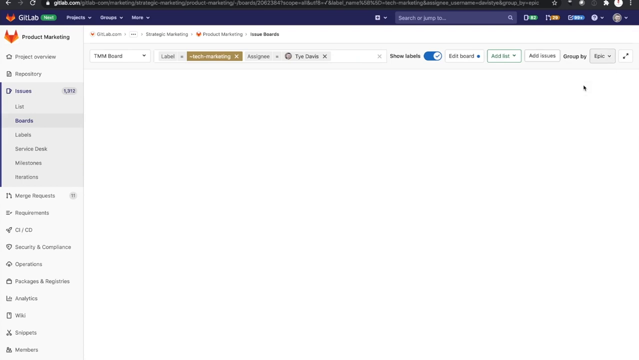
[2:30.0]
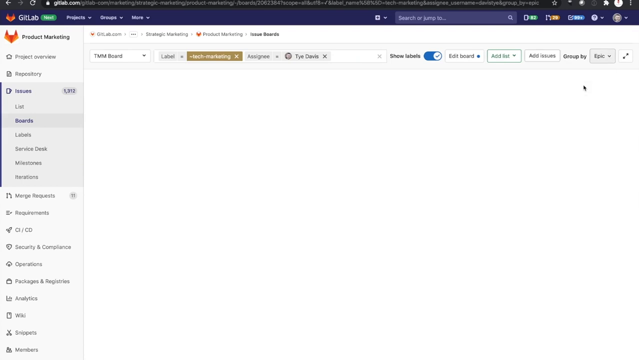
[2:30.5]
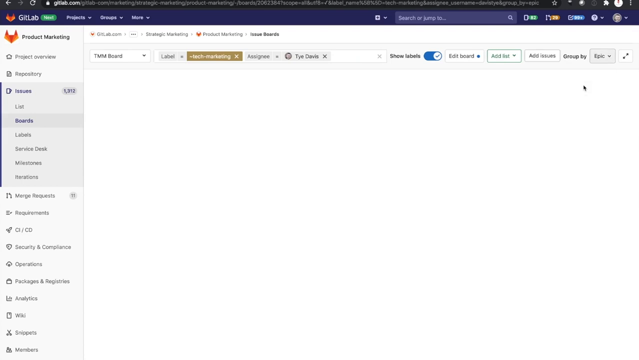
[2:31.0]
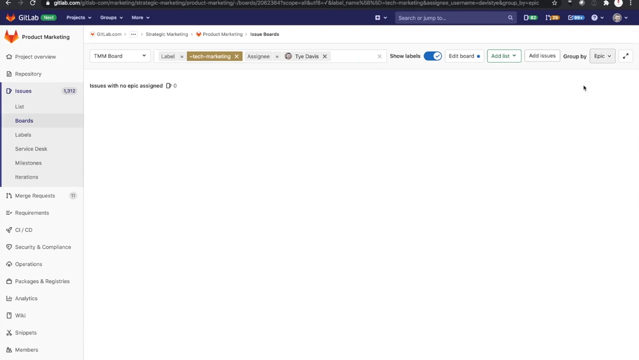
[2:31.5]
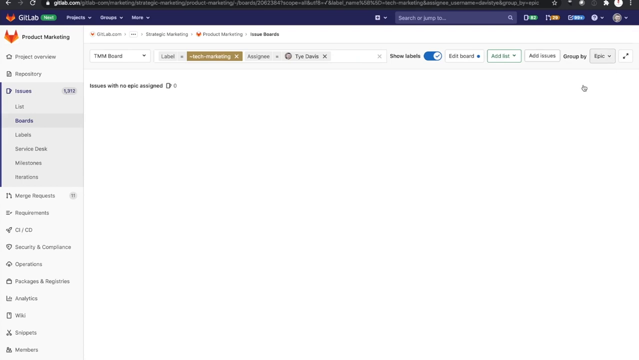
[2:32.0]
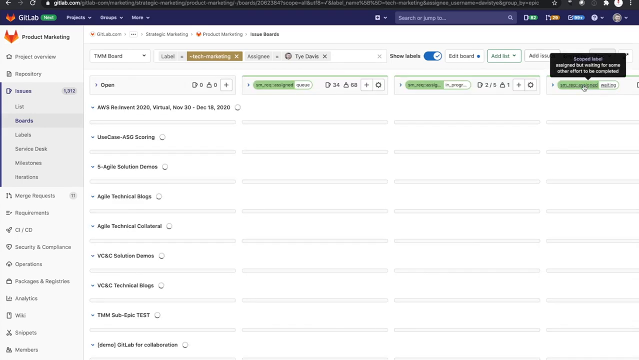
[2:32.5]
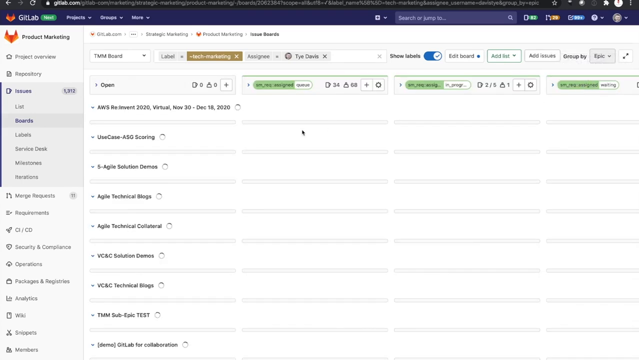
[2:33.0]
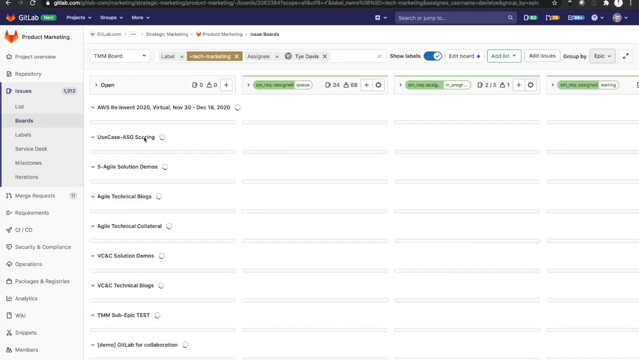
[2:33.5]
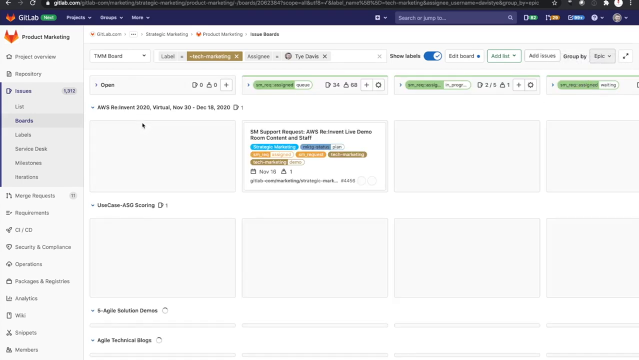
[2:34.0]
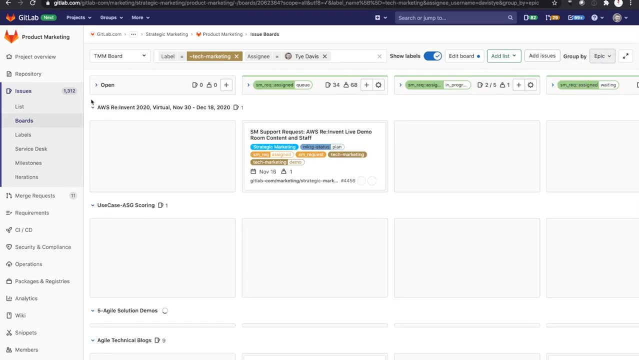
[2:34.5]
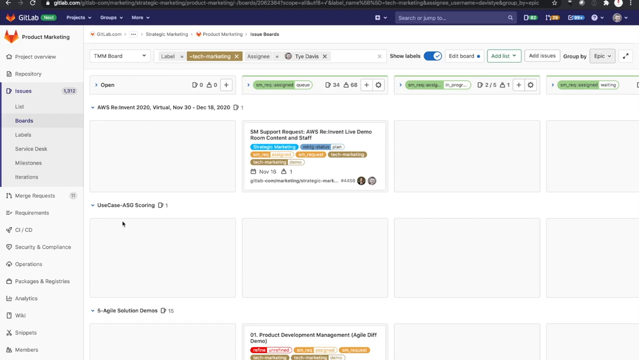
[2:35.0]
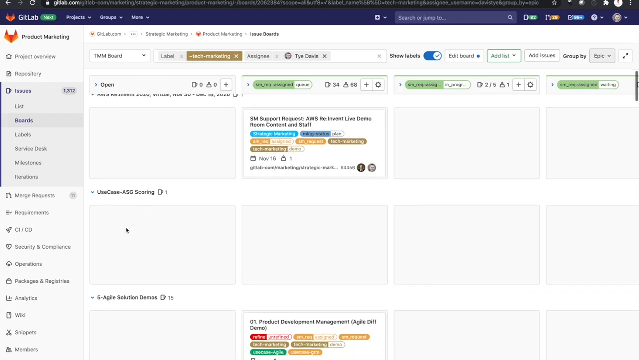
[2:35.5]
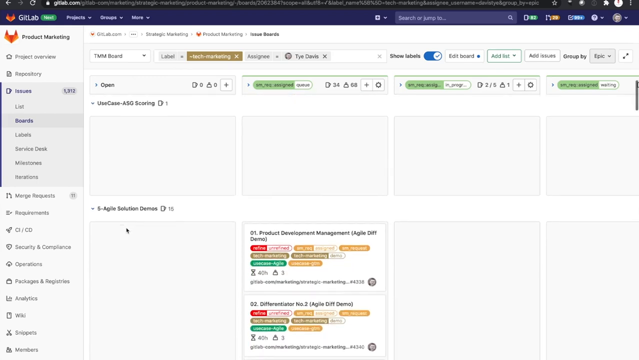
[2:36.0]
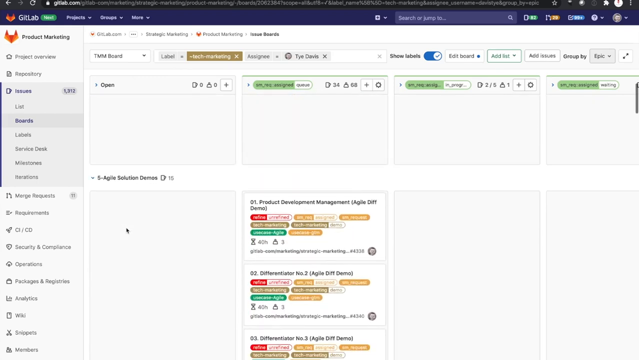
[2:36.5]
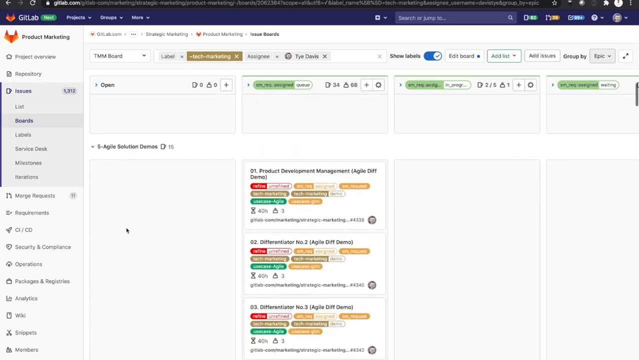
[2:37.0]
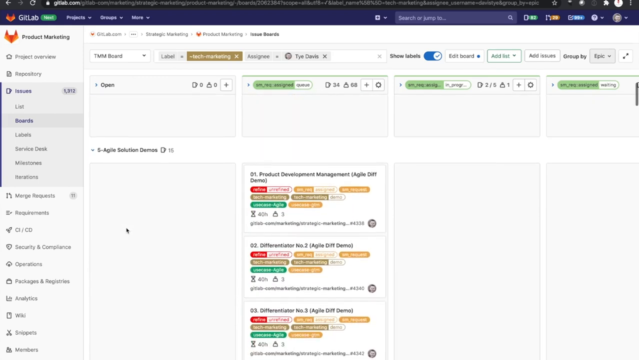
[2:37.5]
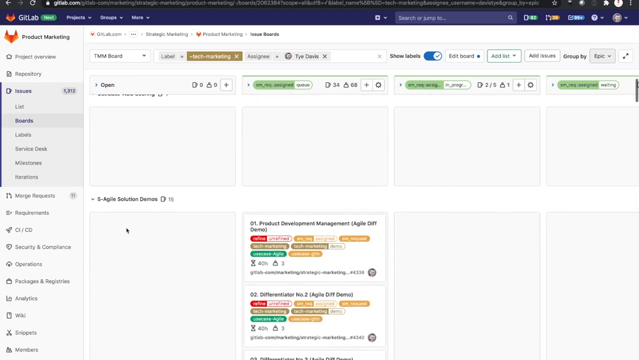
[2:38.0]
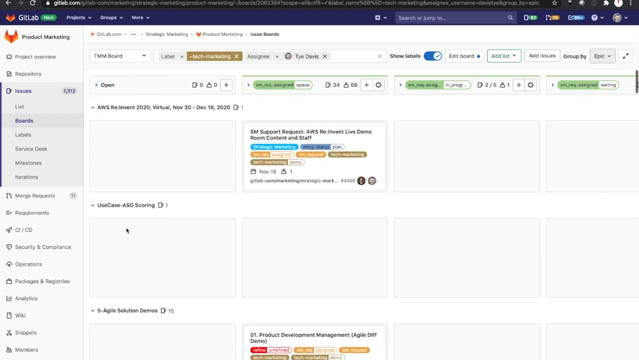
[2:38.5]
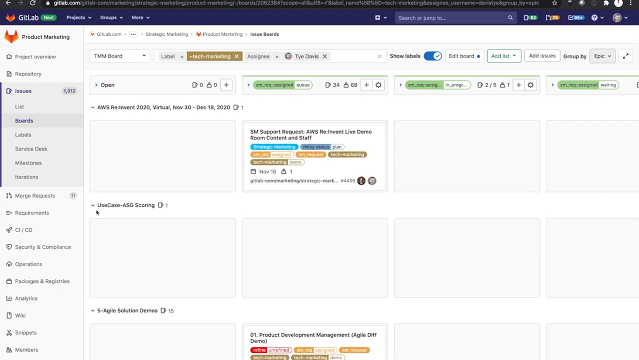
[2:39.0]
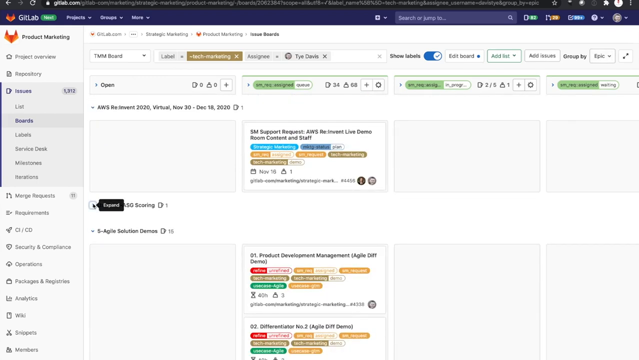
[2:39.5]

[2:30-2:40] The GitLab interface shows many different sections and areas. In the top left of the screen is the GitLab logo with the word "GitLab" right next to it.